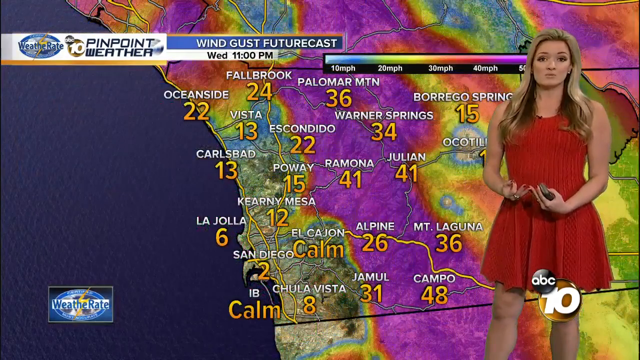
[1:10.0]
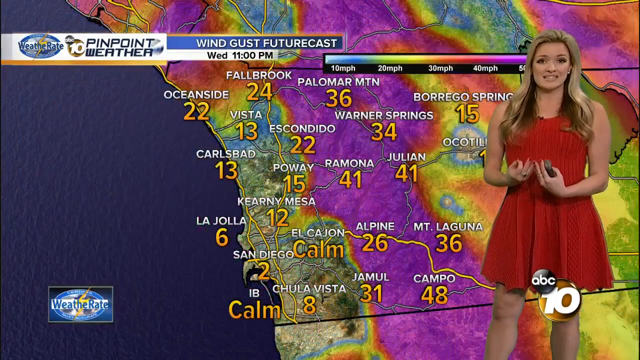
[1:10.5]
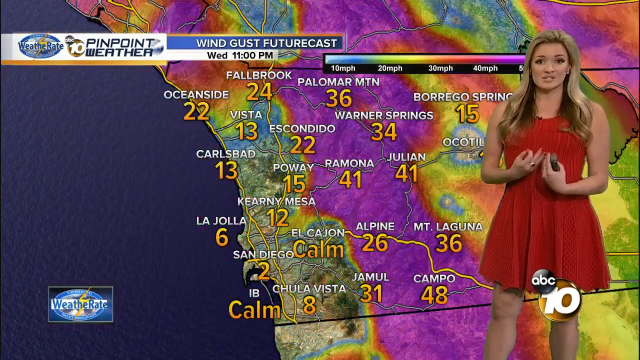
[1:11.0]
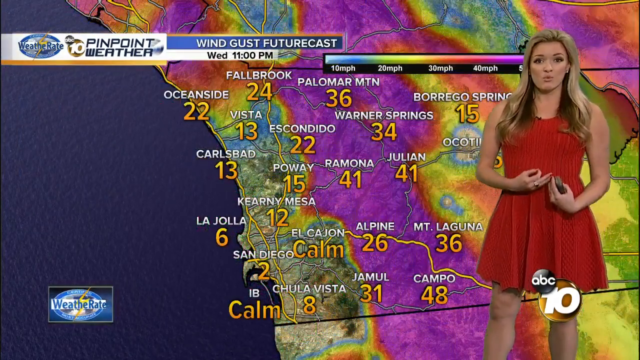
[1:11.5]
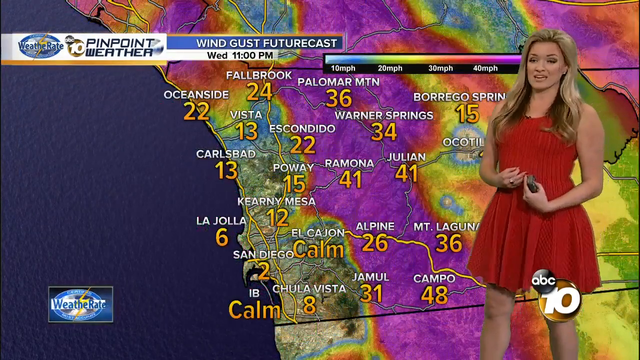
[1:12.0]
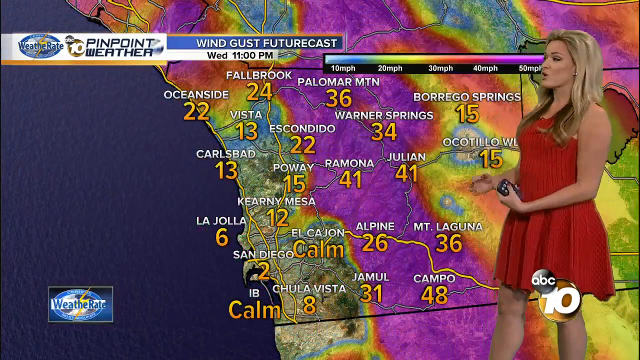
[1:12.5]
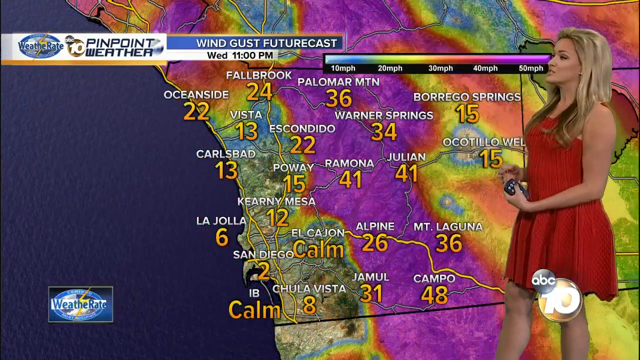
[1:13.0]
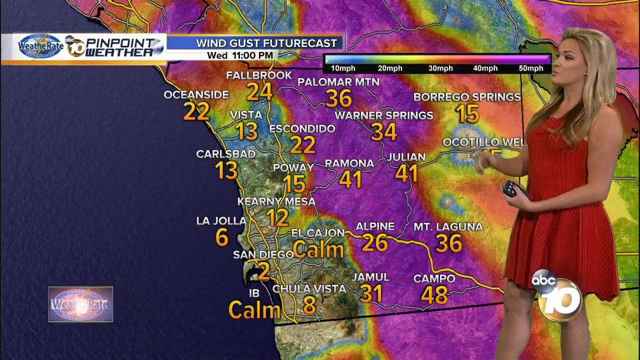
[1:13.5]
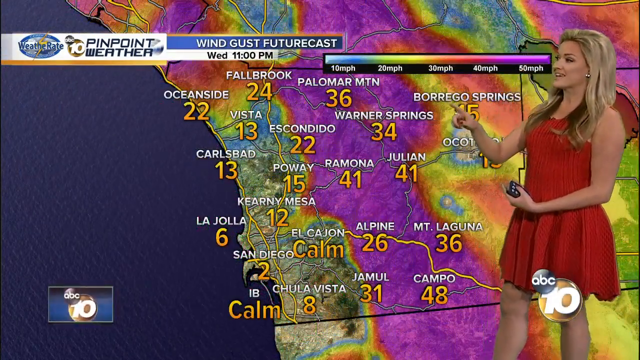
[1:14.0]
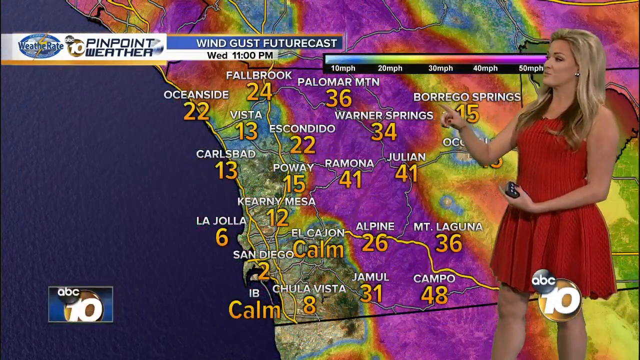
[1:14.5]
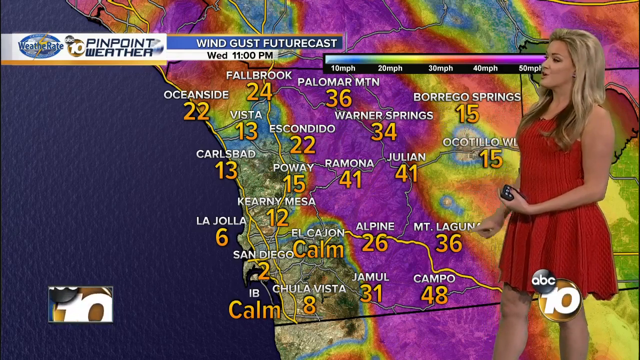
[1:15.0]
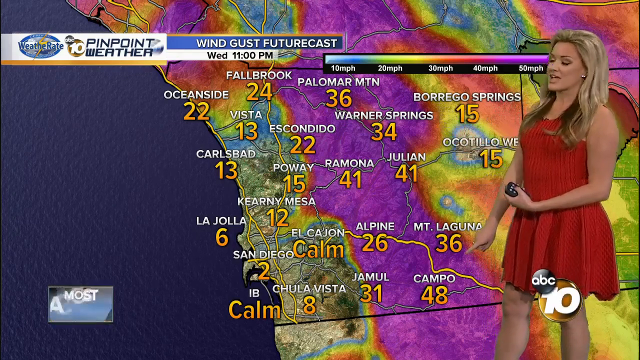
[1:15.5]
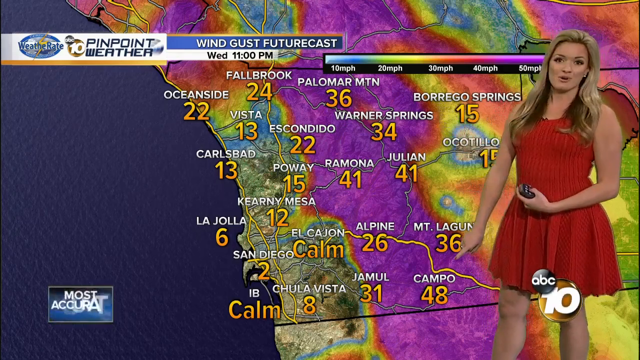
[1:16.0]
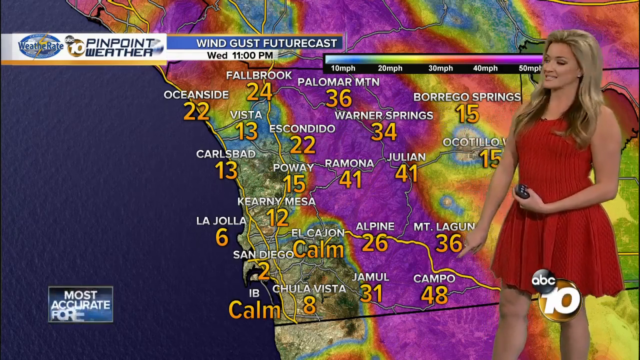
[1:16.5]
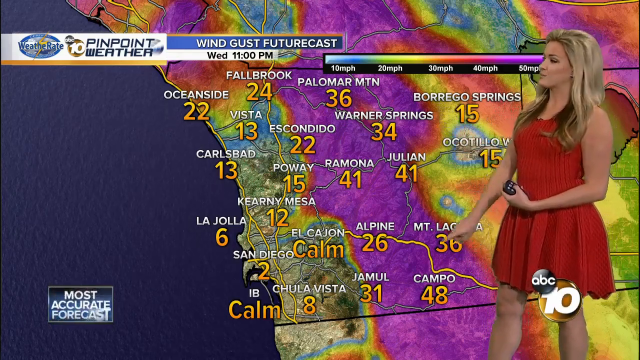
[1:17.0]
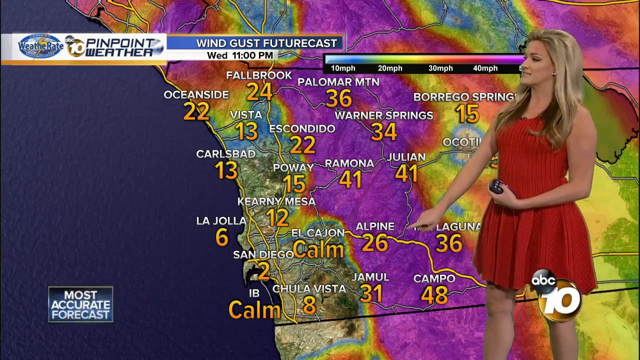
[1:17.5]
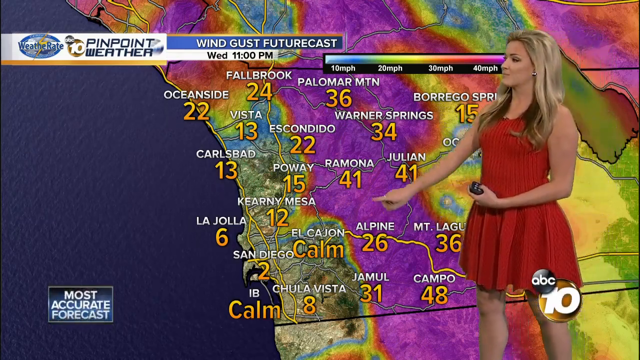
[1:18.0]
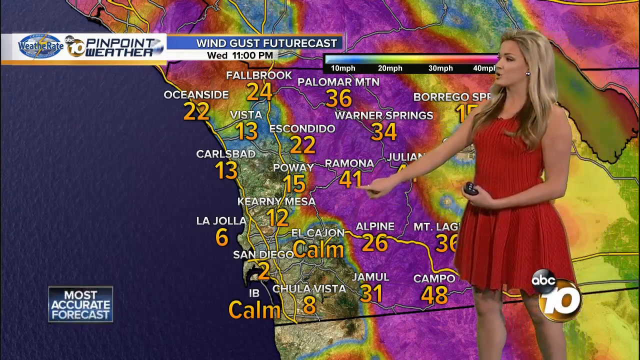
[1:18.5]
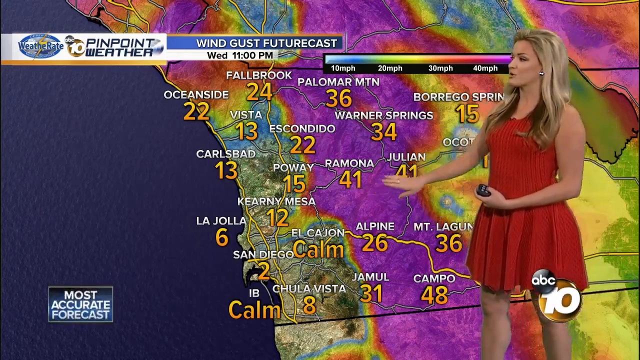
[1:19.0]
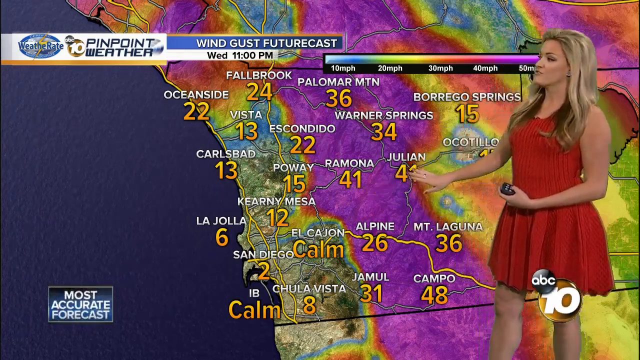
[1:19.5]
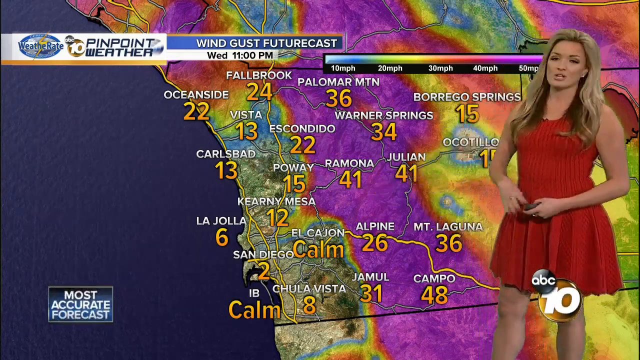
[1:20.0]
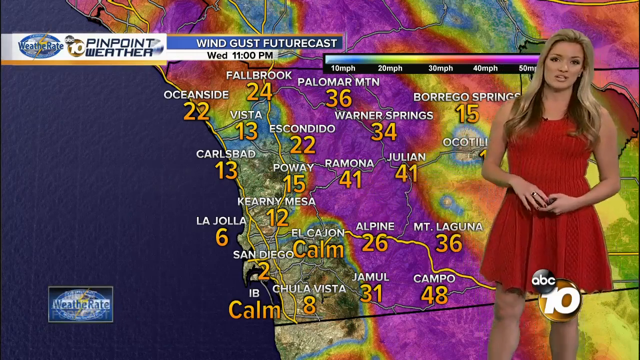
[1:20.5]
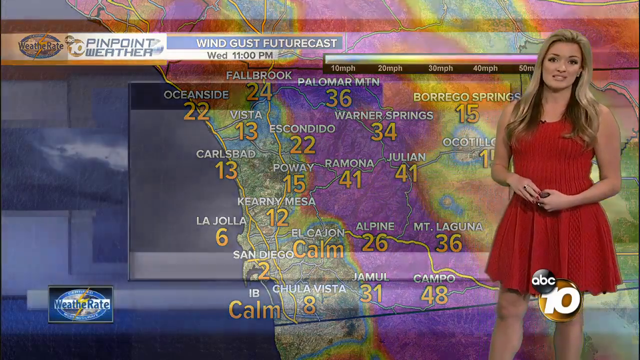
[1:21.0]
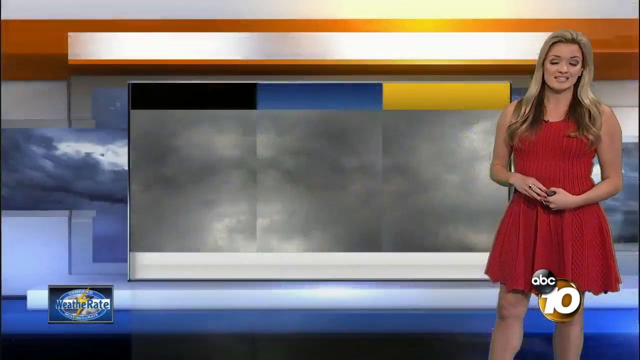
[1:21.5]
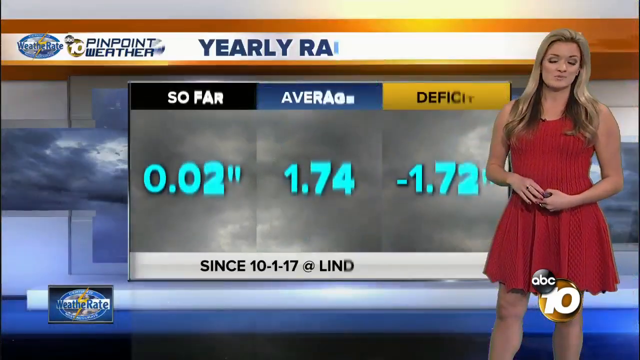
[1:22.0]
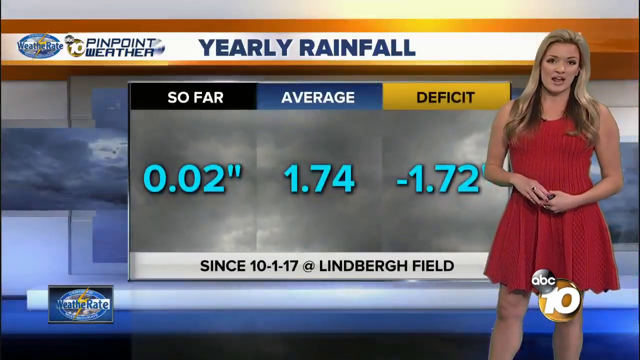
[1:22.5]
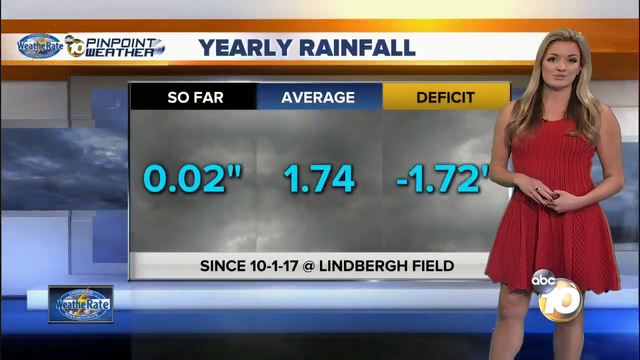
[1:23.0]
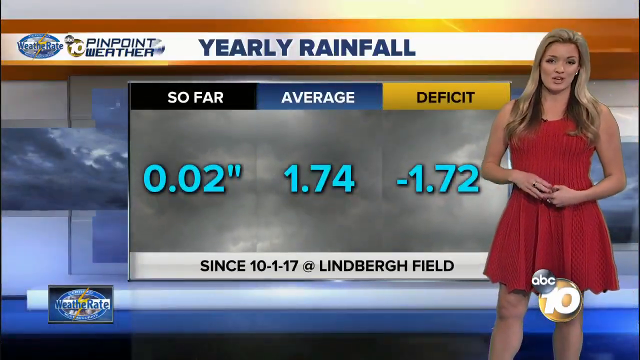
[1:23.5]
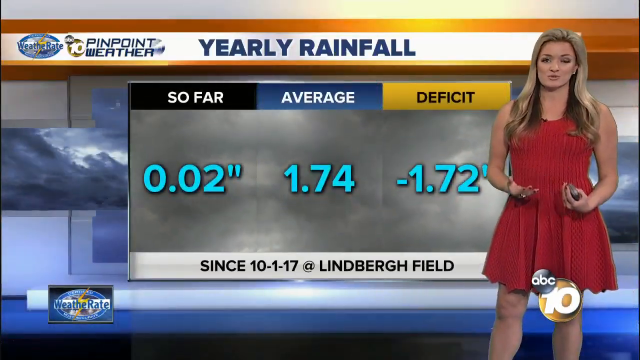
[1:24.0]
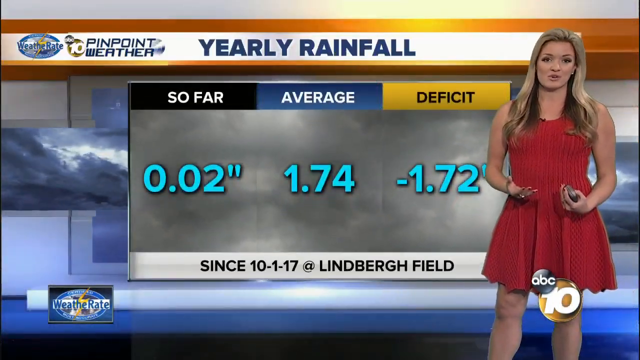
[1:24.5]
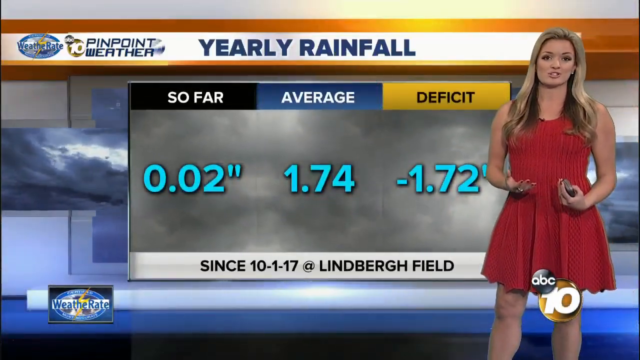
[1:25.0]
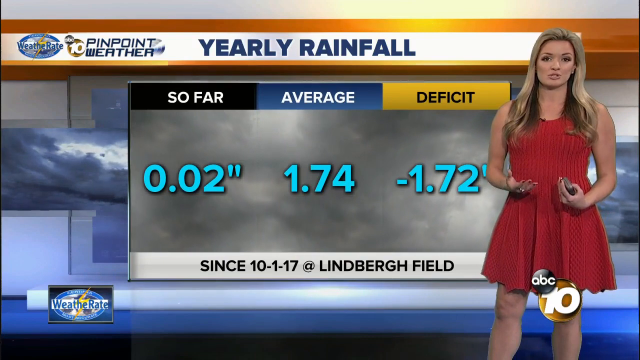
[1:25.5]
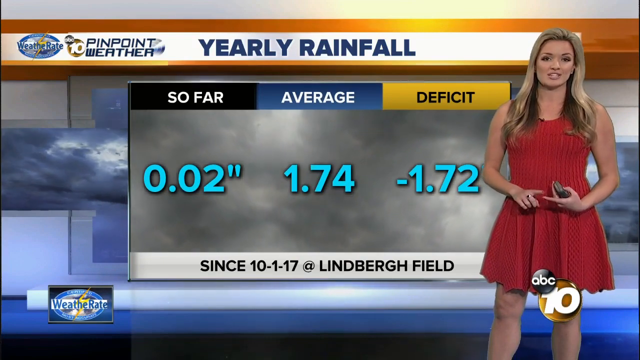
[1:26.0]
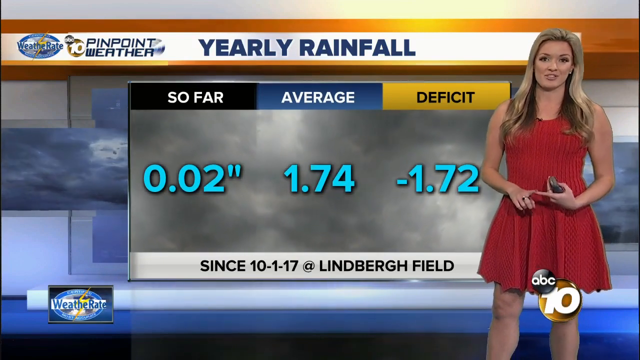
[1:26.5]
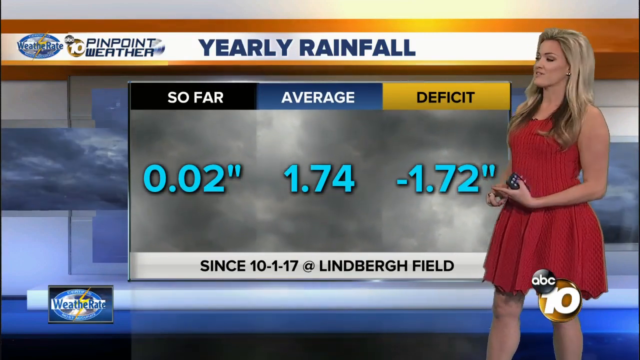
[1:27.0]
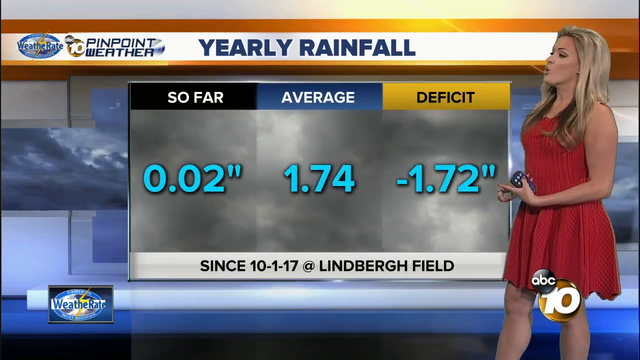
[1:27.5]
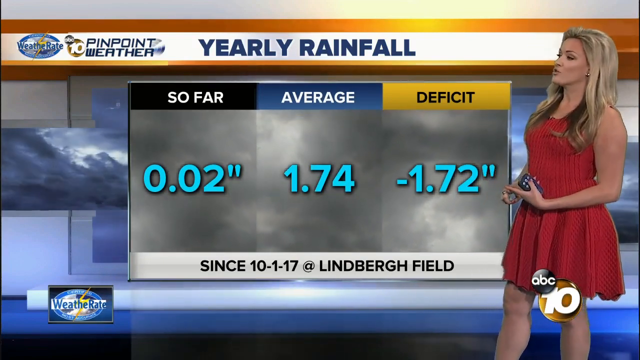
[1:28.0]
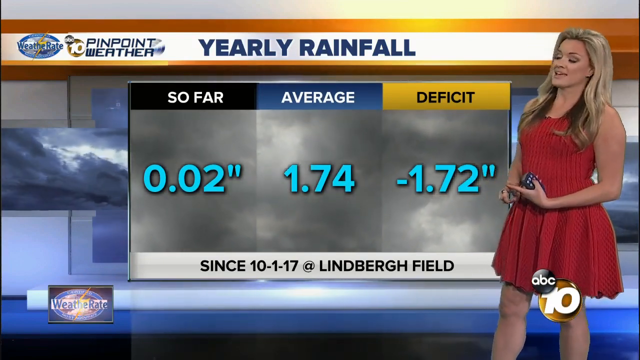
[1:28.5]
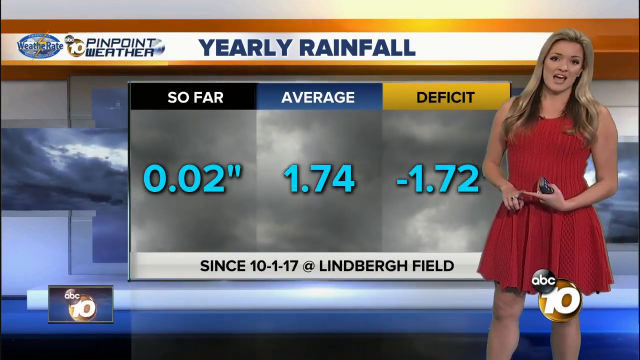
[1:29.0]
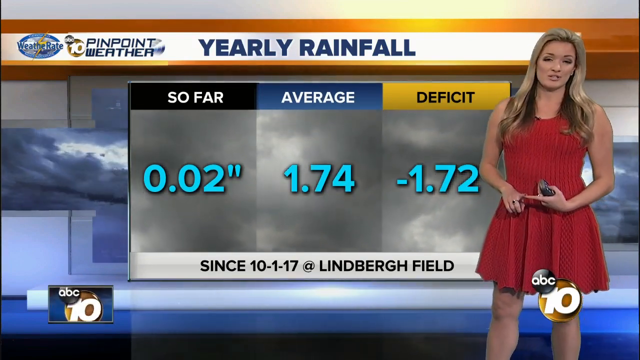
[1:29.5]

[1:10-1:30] She continues explaining the places and their numbers, showing where the wind will be high and where it will be low. A yearly rainfall chart then shows 0.02 so far, an average of 1.74 and a deficit of -1.72, with the text "since 10 january 2017", and she explains it. The video then returns to the forecast map showing the places and wind speeds at certain times, with colors representing how high or low the wind will be, and she explains the meaning of each color.